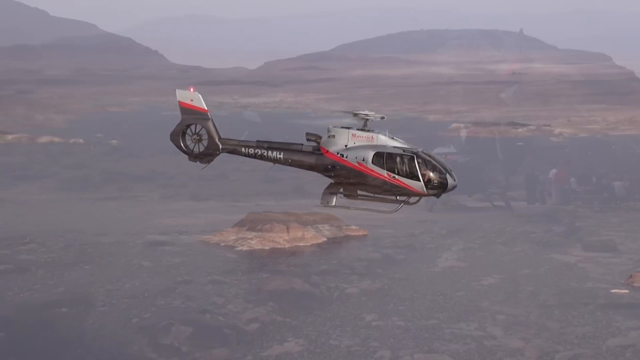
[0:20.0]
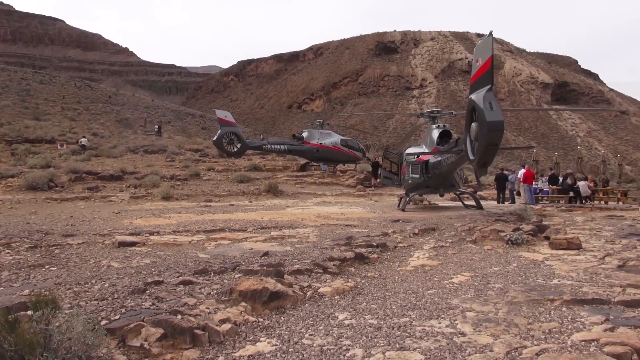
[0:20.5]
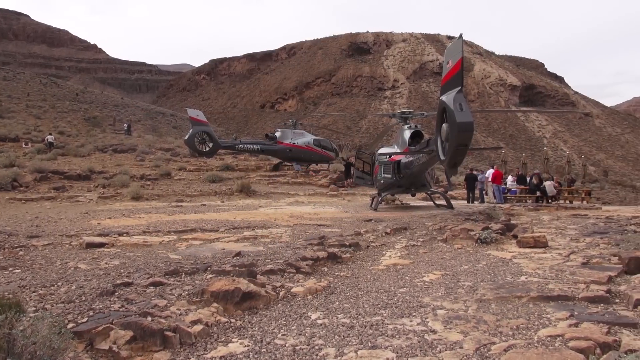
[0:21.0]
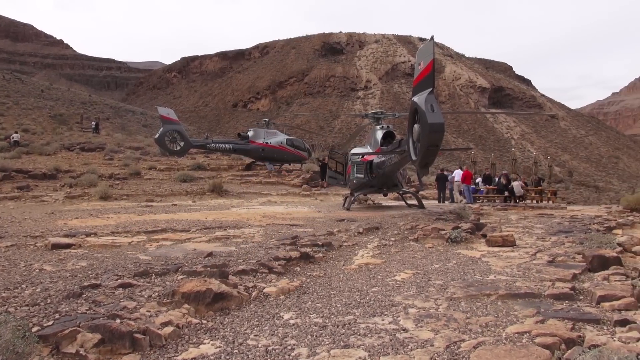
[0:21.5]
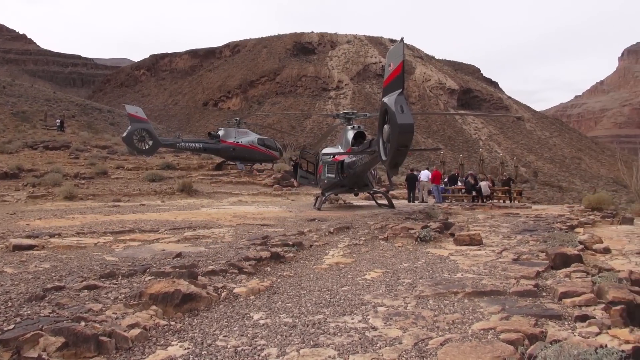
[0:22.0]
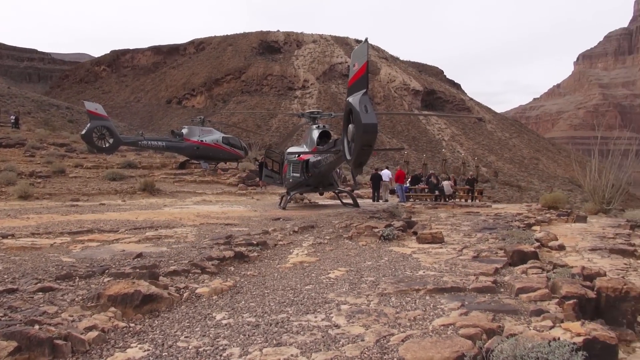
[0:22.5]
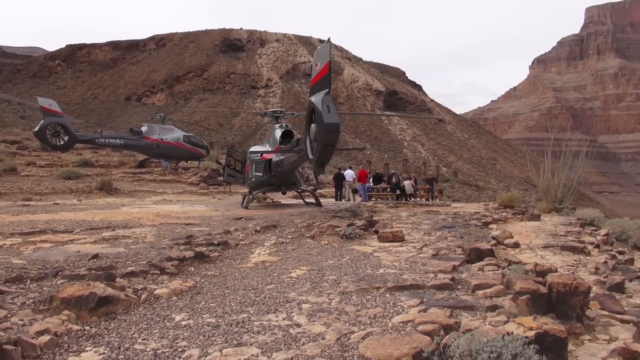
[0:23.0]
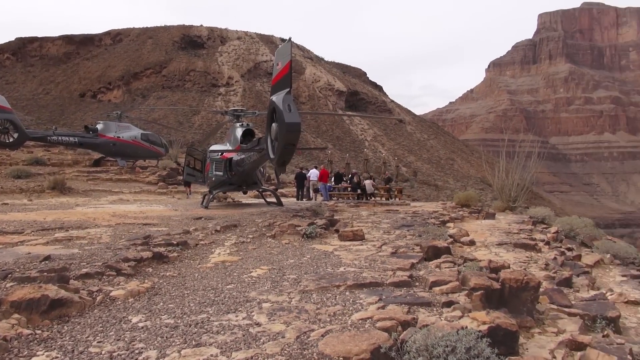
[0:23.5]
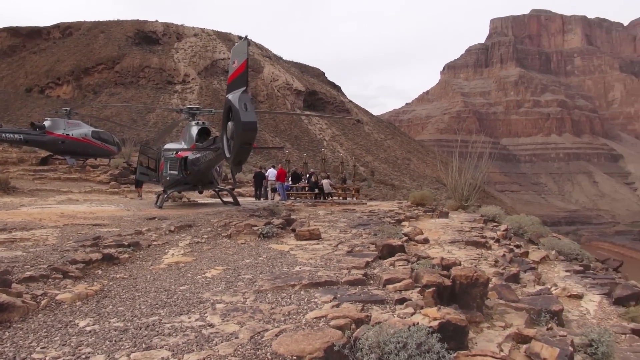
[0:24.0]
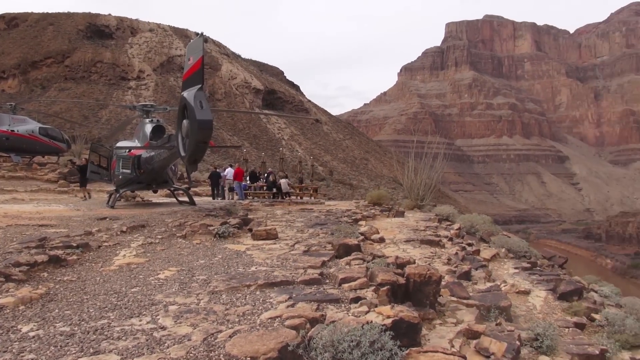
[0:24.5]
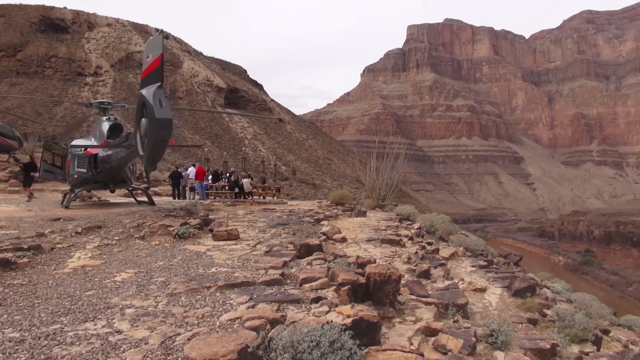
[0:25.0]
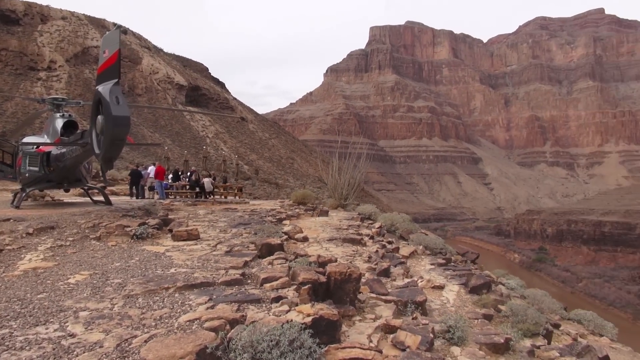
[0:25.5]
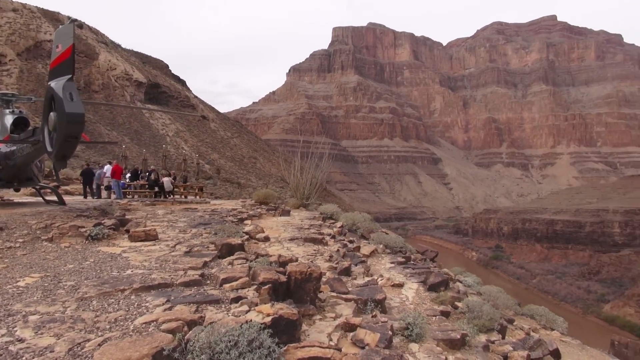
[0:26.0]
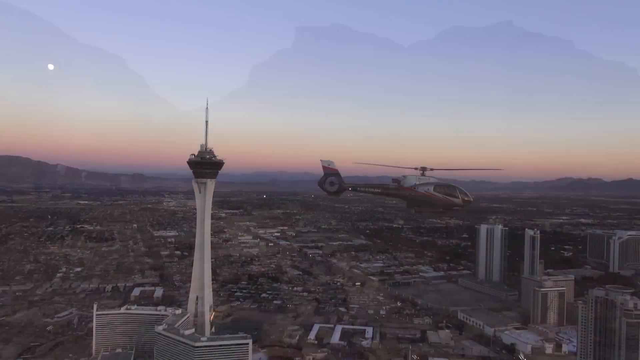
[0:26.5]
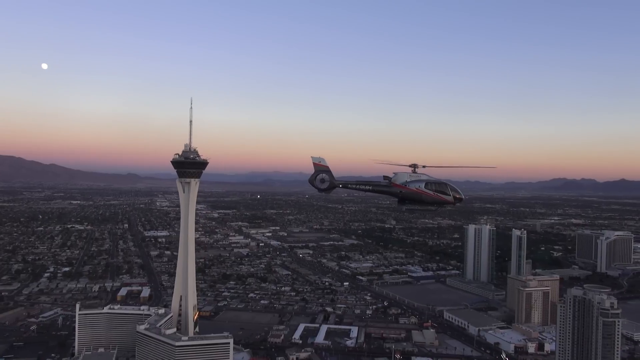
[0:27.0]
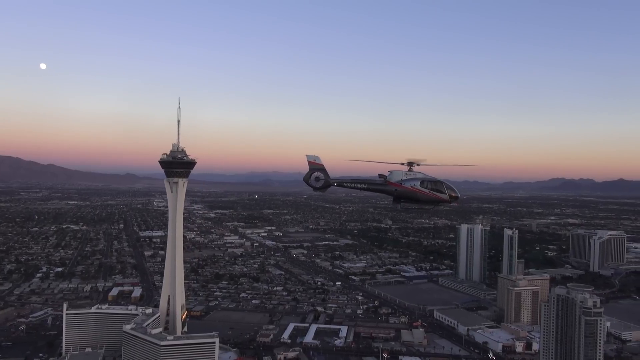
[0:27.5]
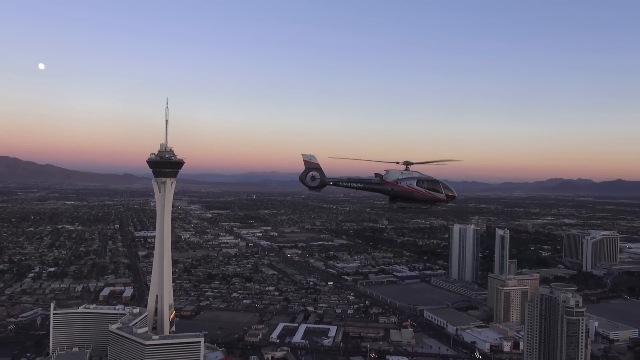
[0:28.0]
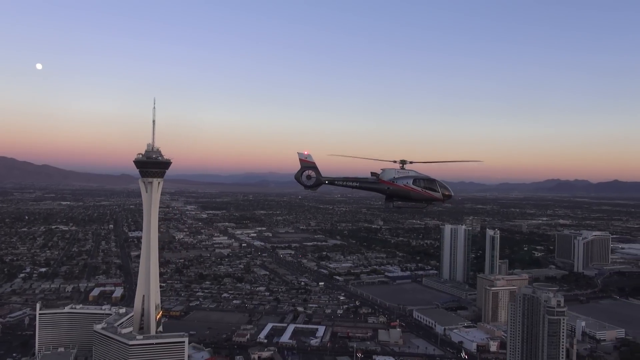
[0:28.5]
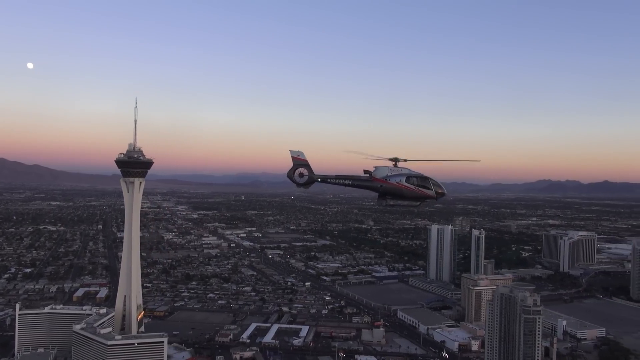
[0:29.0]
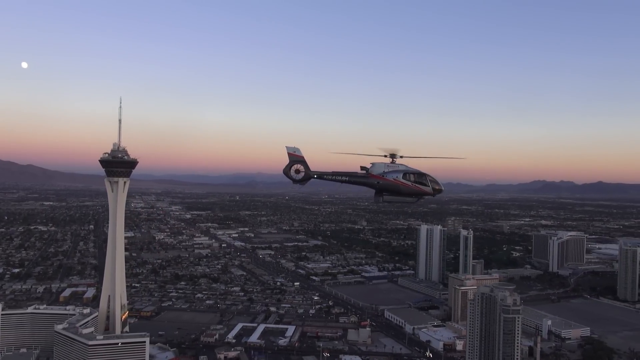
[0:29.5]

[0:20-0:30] The helicopters seem to be at a pickup point where they take off, and there seem to be a few people there, in the mountainous section of the country. The helicopters then go above the city.